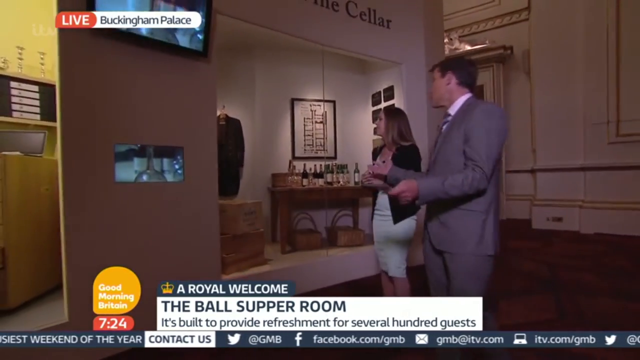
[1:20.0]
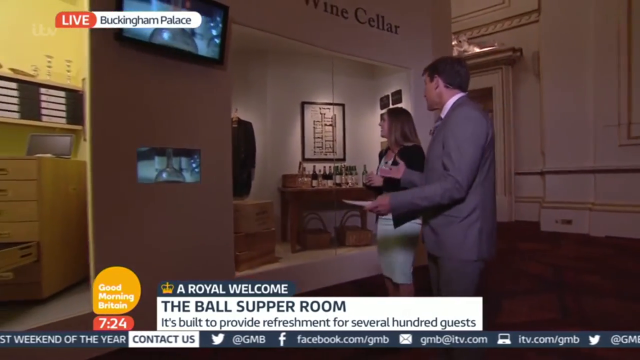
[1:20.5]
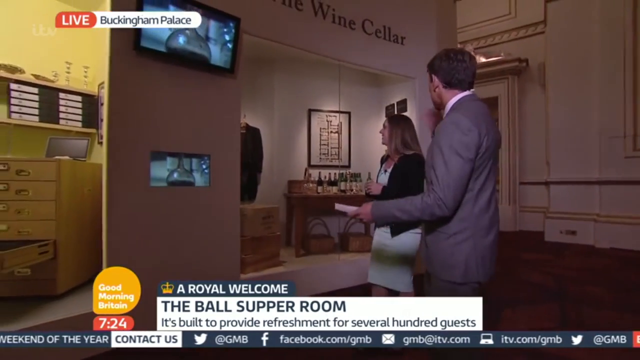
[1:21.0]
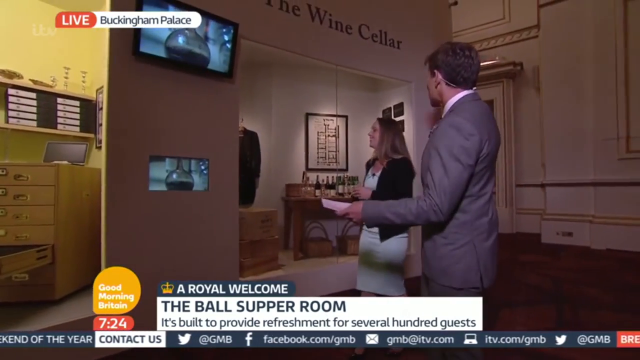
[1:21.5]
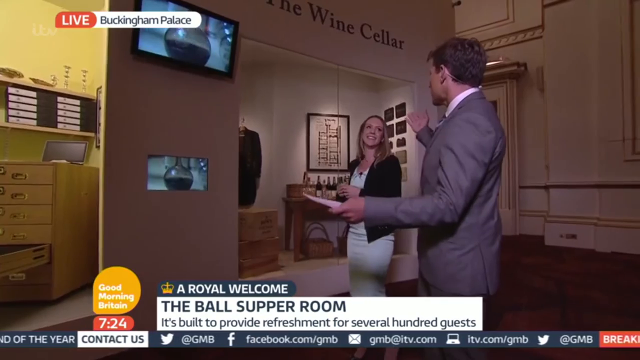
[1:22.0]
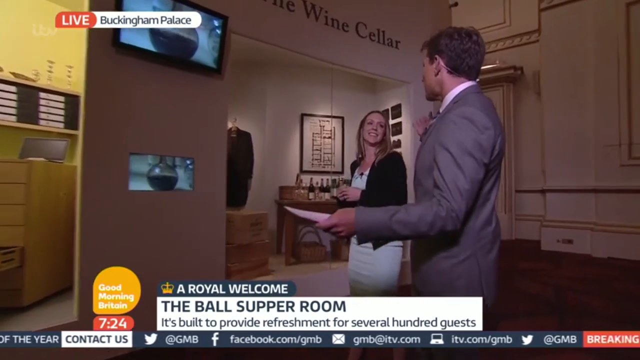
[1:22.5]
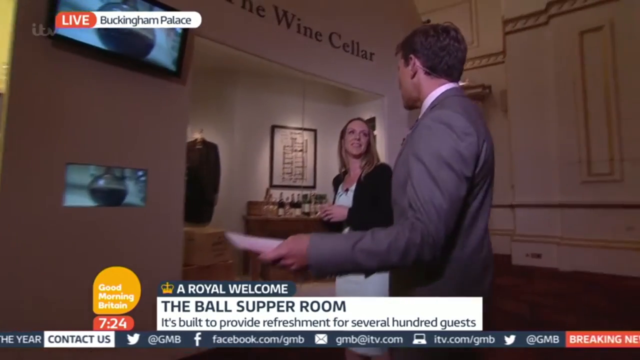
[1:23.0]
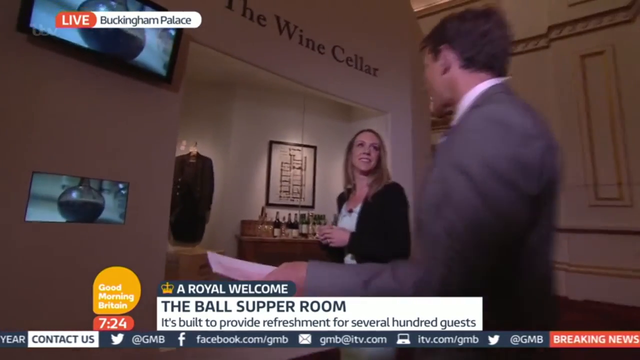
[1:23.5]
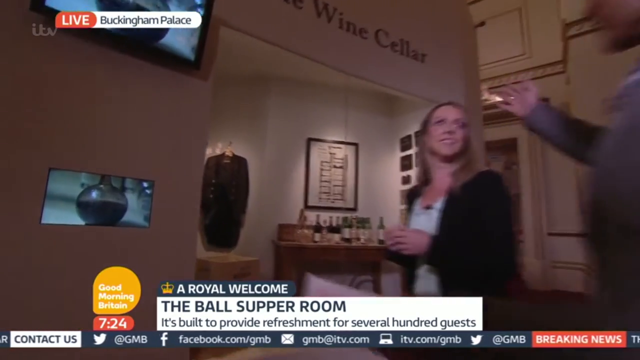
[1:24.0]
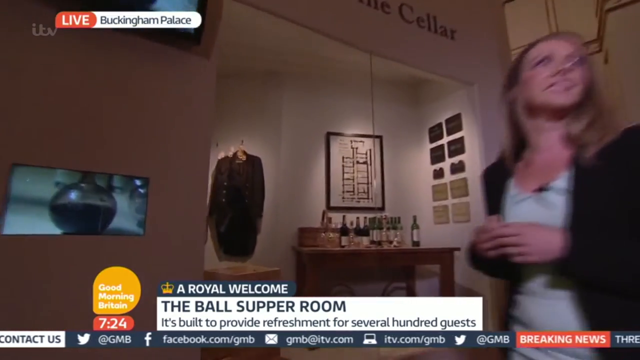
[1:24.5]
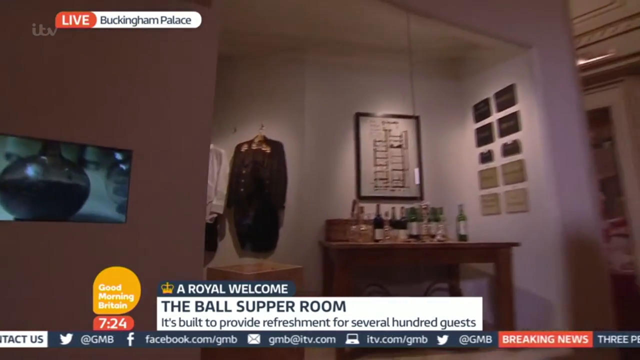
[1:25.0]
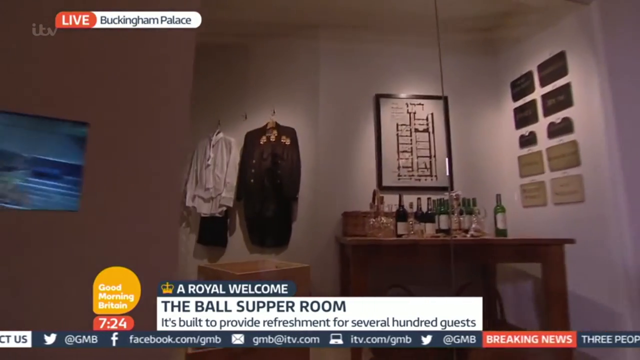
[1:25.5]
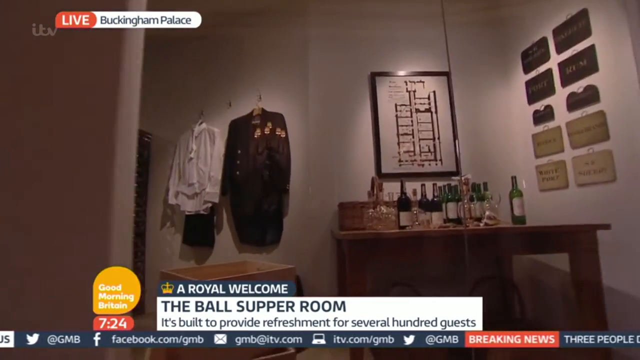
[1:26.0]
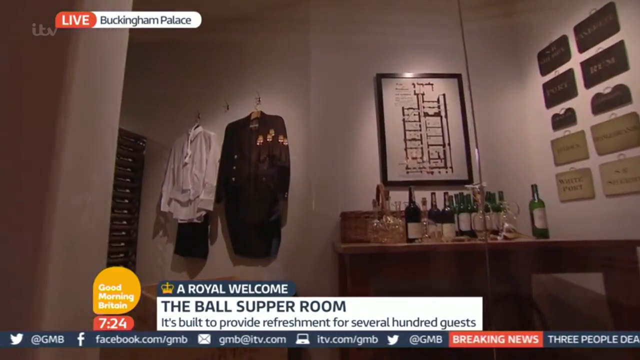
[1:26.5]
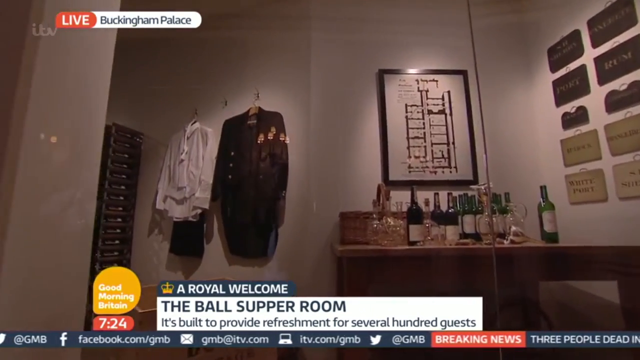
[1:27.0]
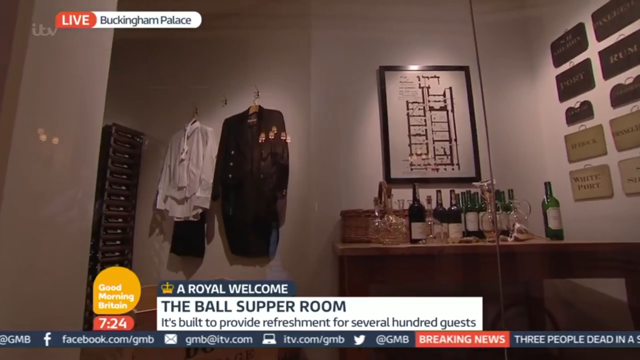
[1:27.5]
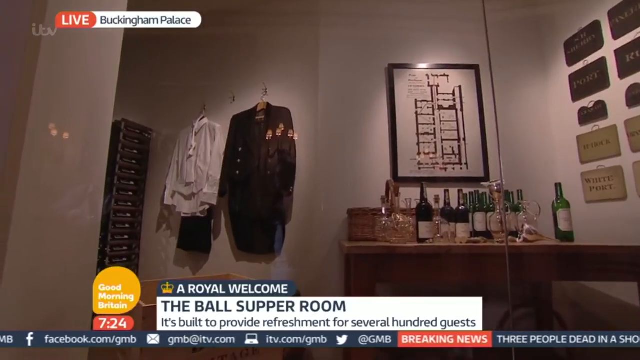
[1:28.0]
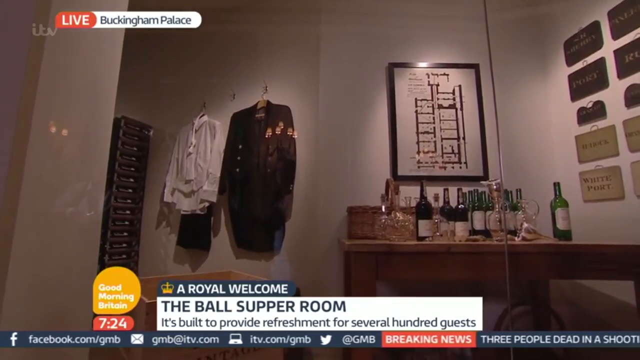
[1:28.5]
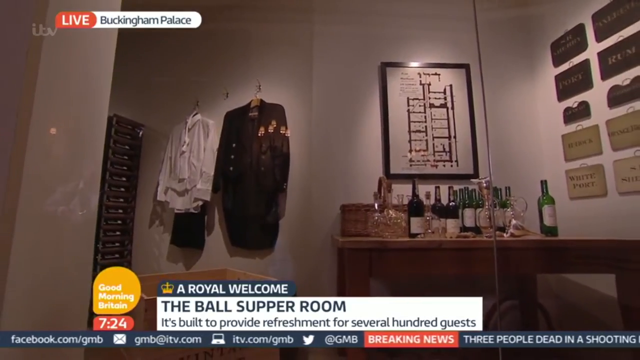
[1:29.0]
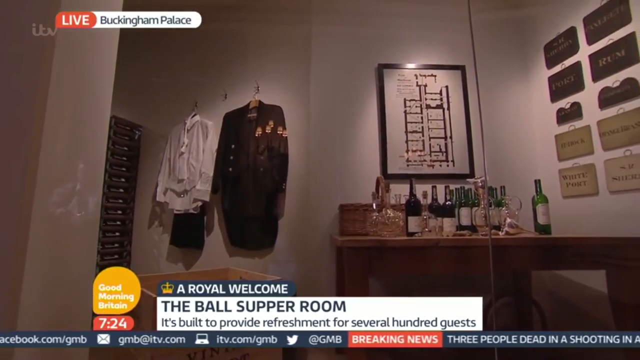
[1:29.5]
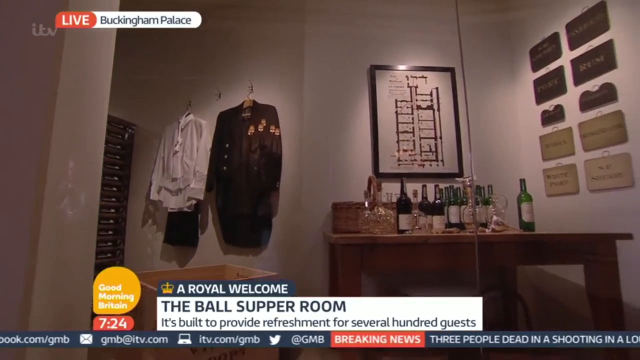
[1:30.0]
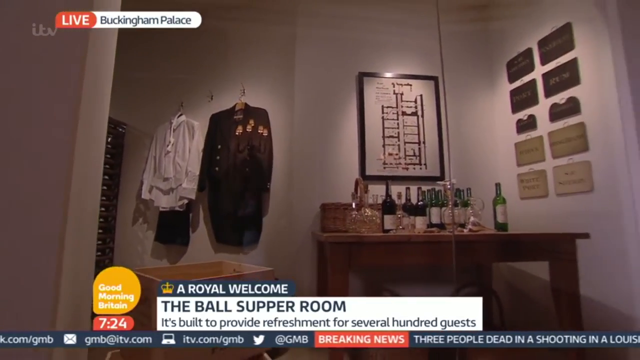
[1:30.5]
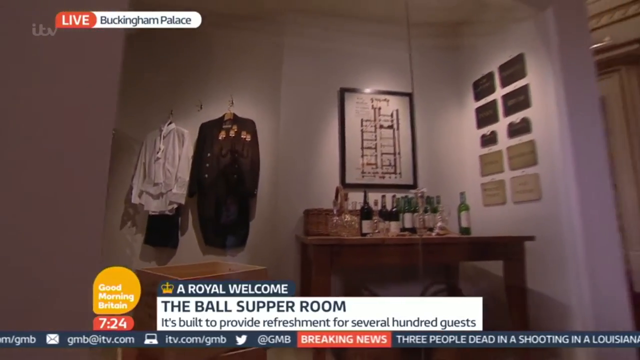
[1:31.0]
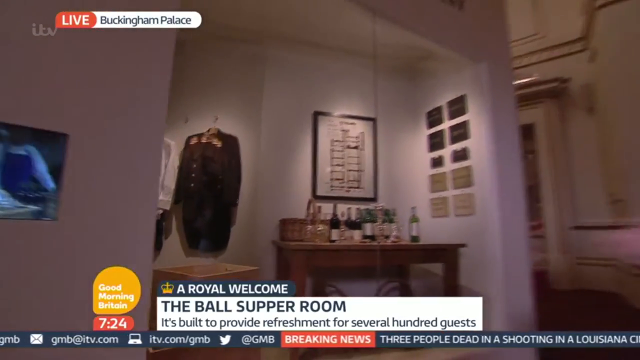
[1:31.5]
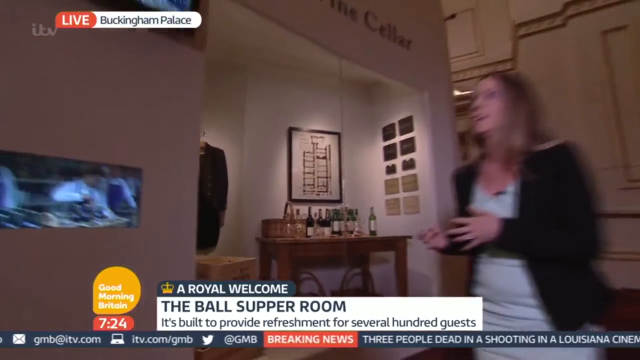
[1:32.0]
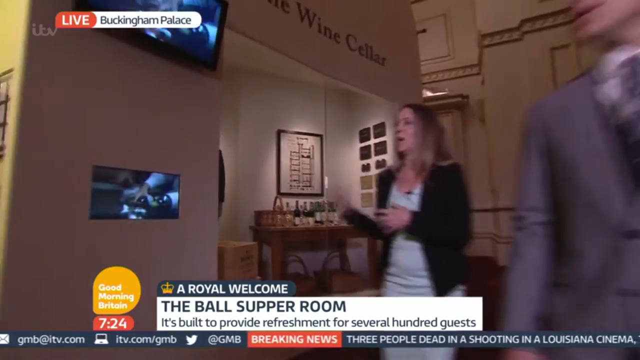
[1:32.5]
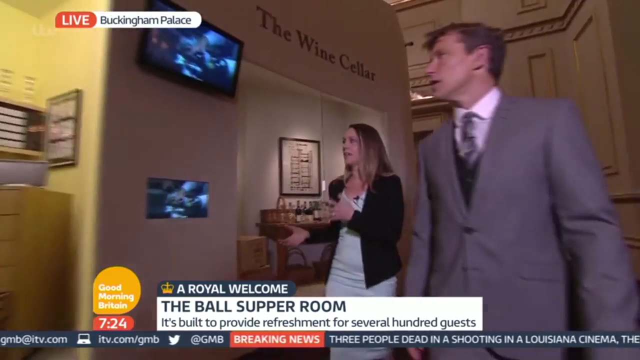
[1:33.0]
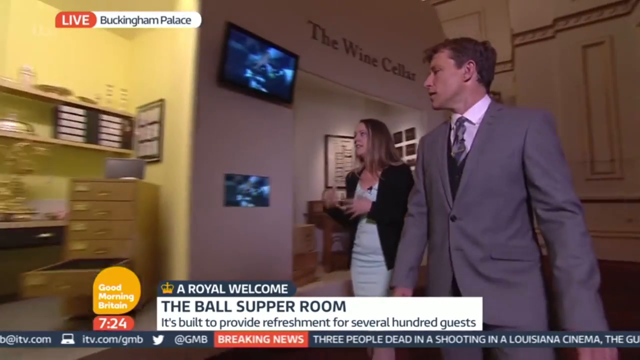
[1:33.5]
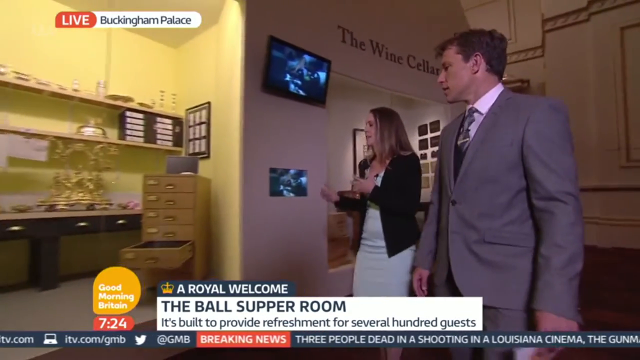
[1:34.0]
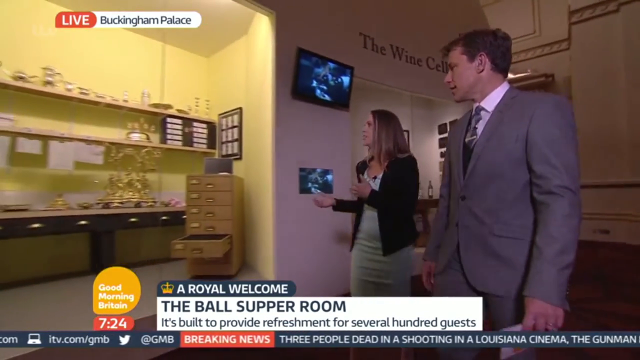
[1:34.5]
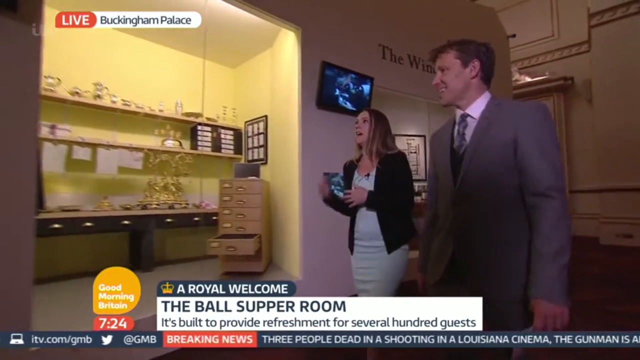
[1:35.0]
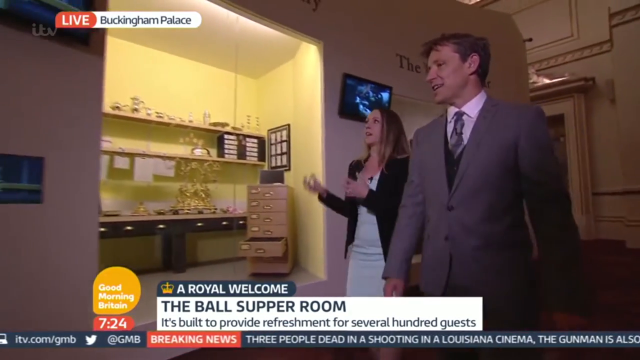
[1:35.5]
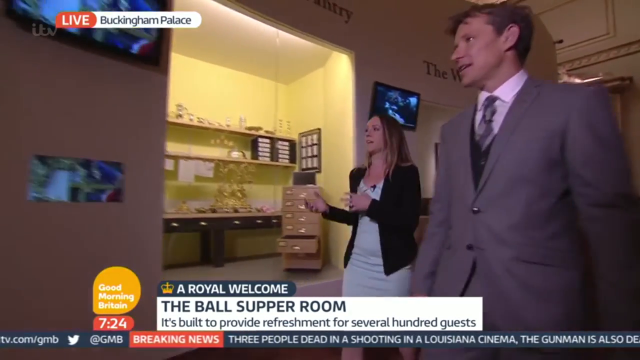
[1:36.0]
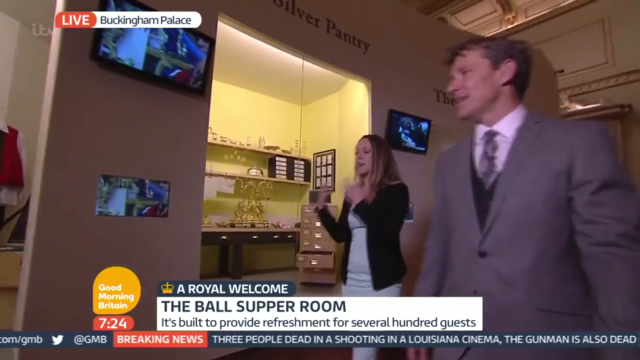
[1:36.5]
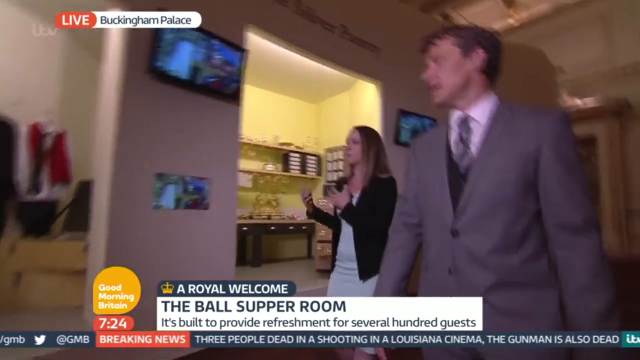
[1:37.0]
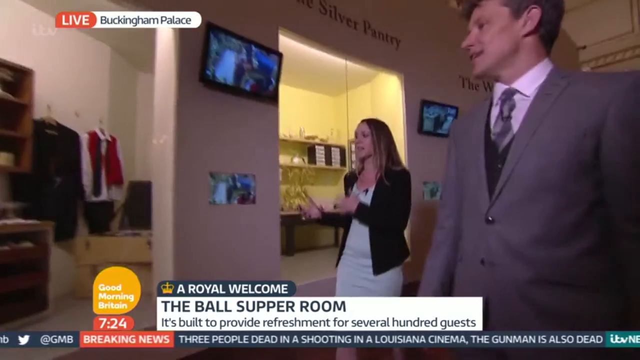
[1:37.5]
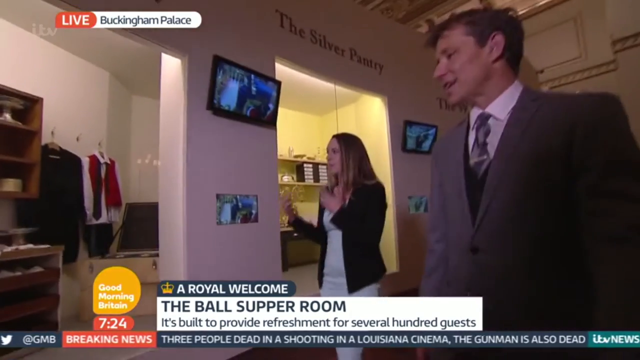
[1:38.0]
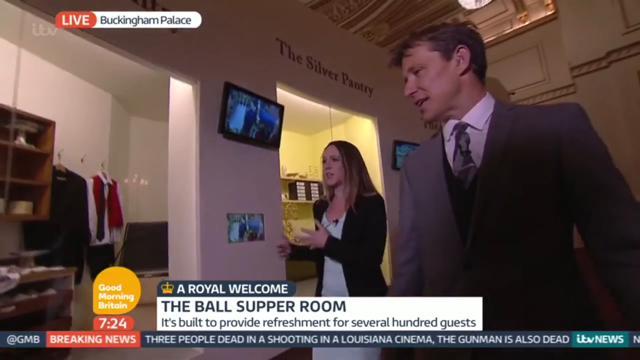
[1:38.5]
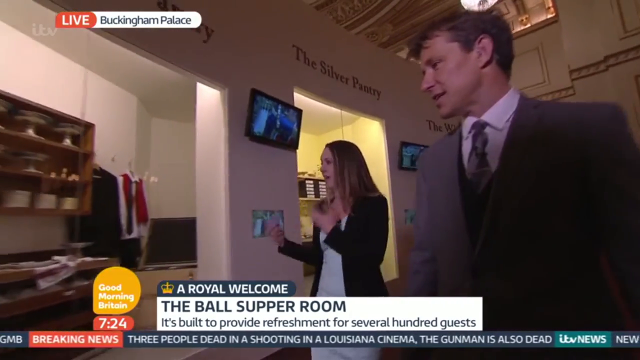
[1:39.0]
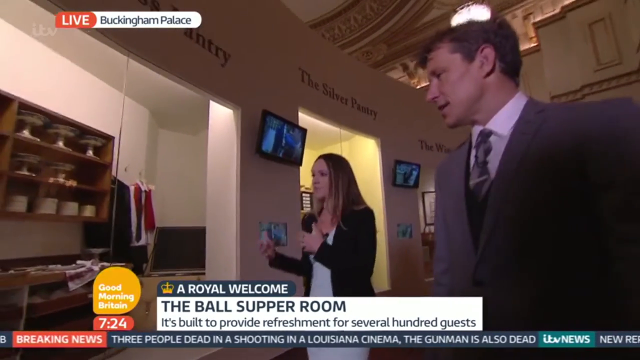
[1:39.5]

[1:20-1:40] The man in a gray suit and white shirt talks to the woman in a white dress with a black coat over it as they stand in front of a museum exhibit. The exhibit has a white wall with a window, and through the window is a wooden desk with different wine bottles on it. Above the wine bottles, on the wall, is a picture with a black frame and a white canvas showing what looks like a painting of shelves. Above the exhibit are the words "the wine cellar". An orange bubble in the lower left reads "Good Morning Britain", with the time "7:24" below it. To the right, a white rectangle reads "the Ball Supper Room" and below it "it's built to provide refreshment for several hundred guests". At the top of the rectangle is a curved blue rectangle with a yellow drawing of the British crown on the left and the words "A Royal Welcome" to the right. The man holds his left hand spread out to his left with a white card in it, and his right hand is also out wide to his right, while the woman holds her hands clasped in front of her chest. The camera zooms in on the wine cellar display: the desk with the wine bottles is on the right, and on the left uniforms hang on the wall, a long white shirt with black pants behind it on the left and, to the right, a black suit with three buttons on the left side. The camera pulls back and the man and woman start walking until they reach another museum exhibit on their right side. It has about three wooden shelves with what look like golden figures sitting on the shelf, looking like intertwined vines, and on the lower right an office cabinet with one of the bottom drawers open. As they walk, the woman talks and gestures, rolling her hands over in front of her chest.